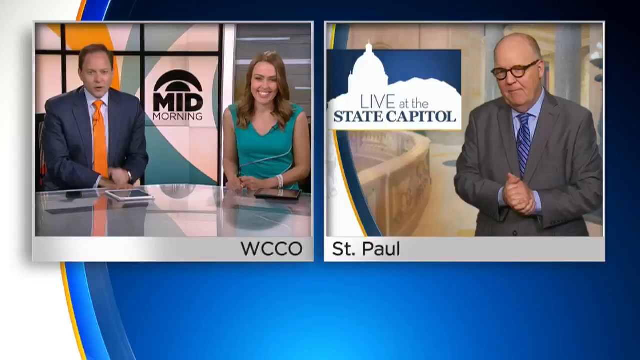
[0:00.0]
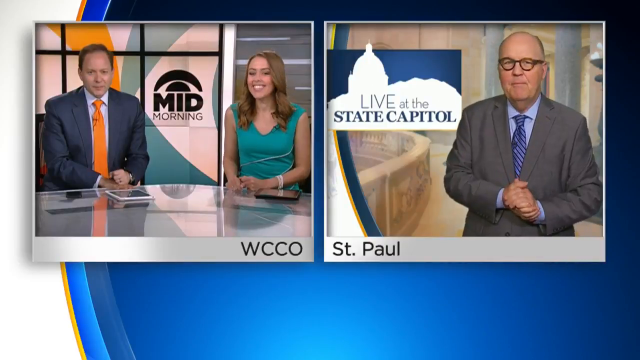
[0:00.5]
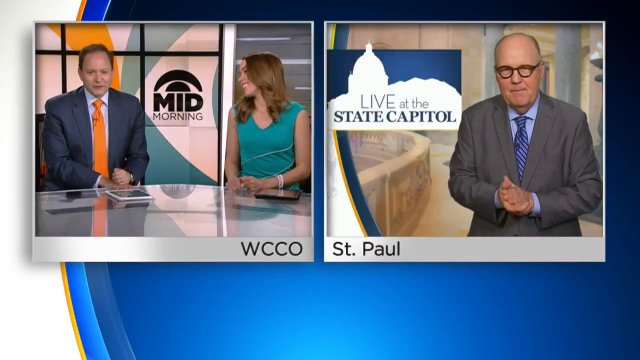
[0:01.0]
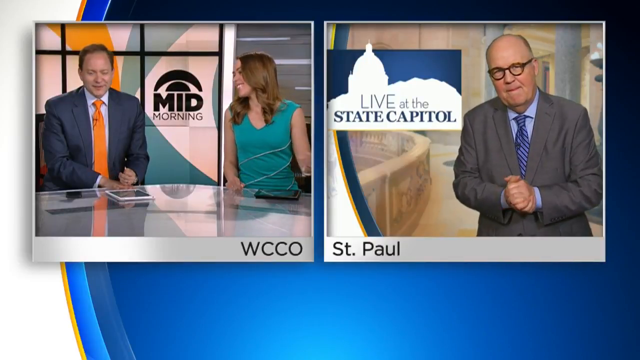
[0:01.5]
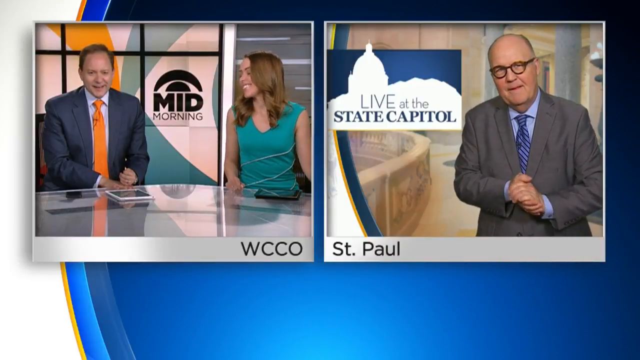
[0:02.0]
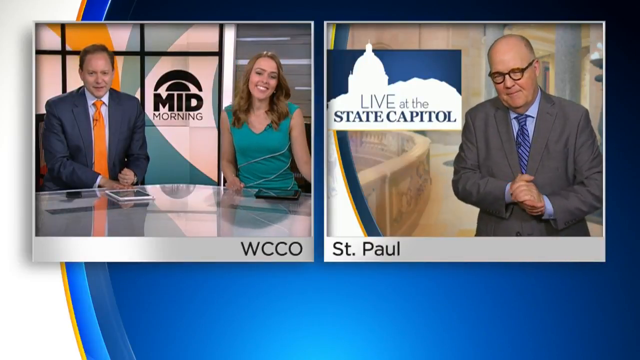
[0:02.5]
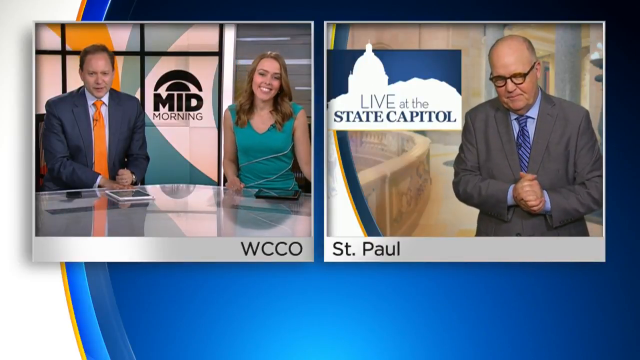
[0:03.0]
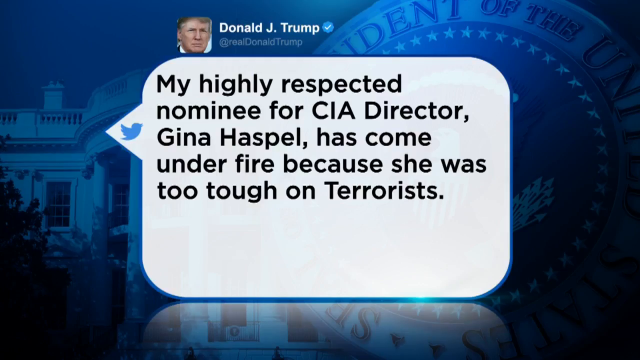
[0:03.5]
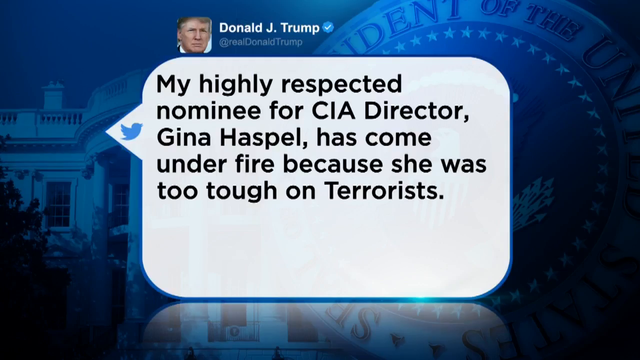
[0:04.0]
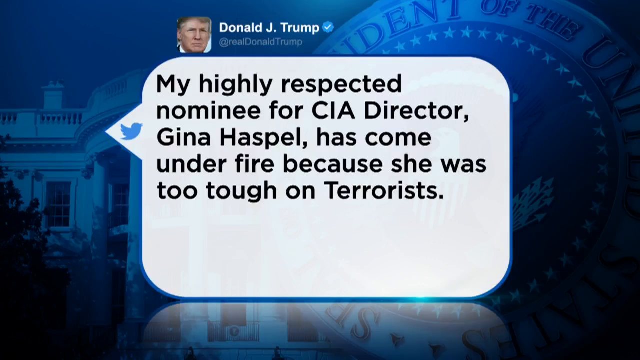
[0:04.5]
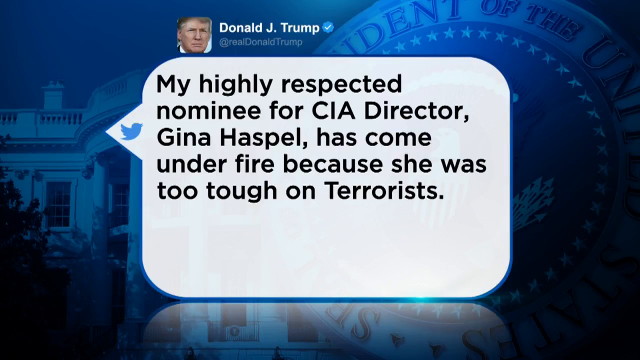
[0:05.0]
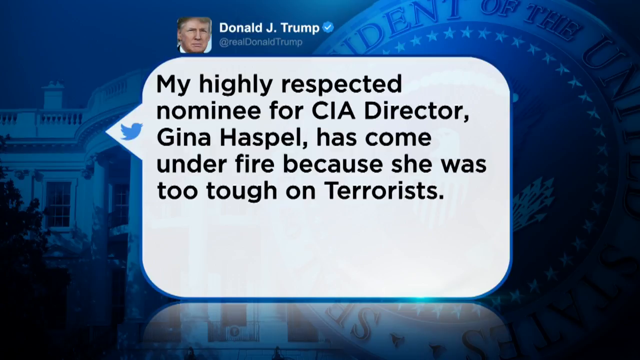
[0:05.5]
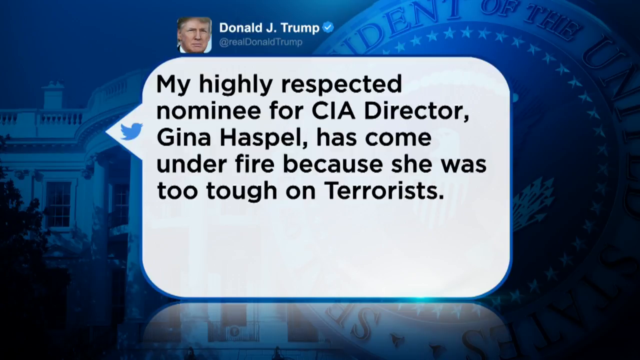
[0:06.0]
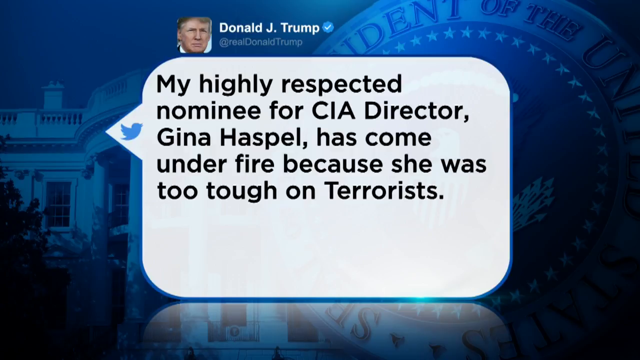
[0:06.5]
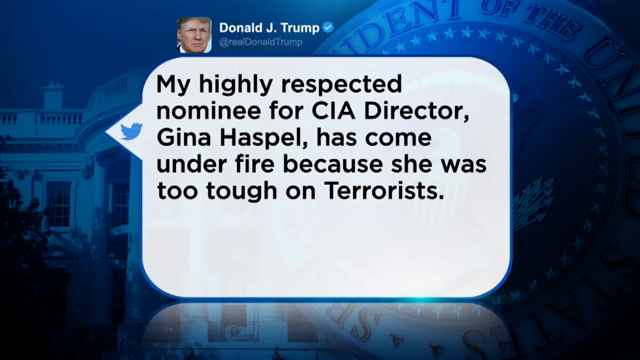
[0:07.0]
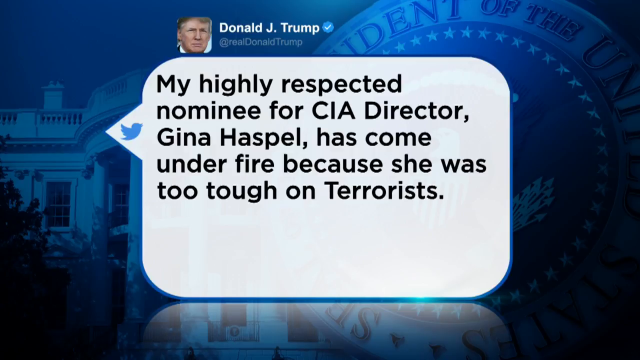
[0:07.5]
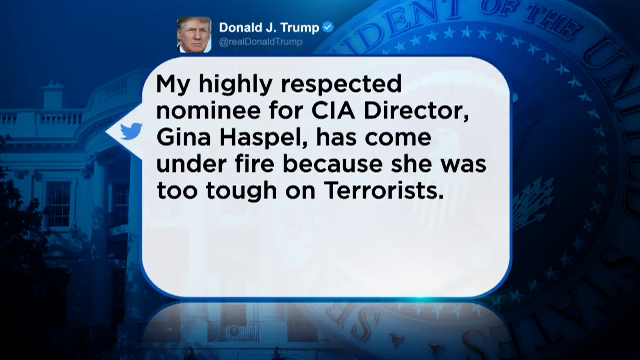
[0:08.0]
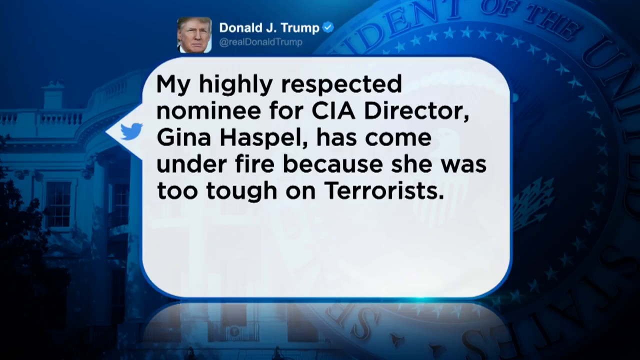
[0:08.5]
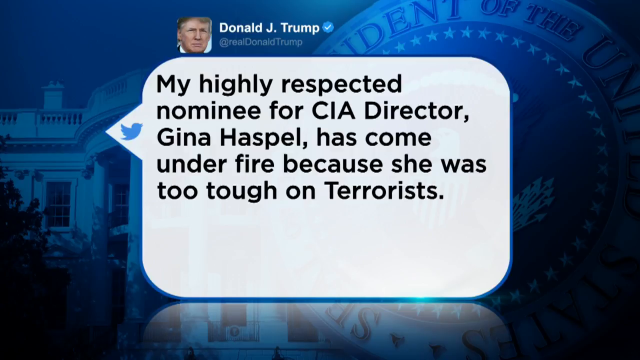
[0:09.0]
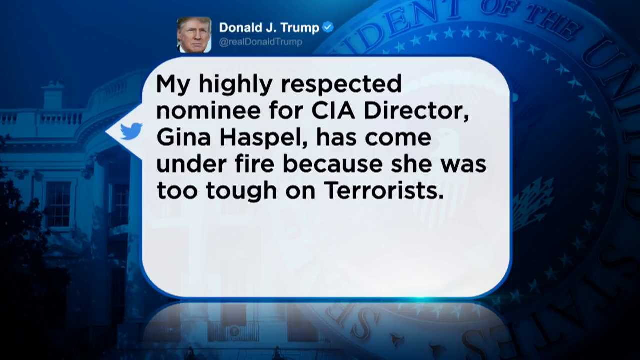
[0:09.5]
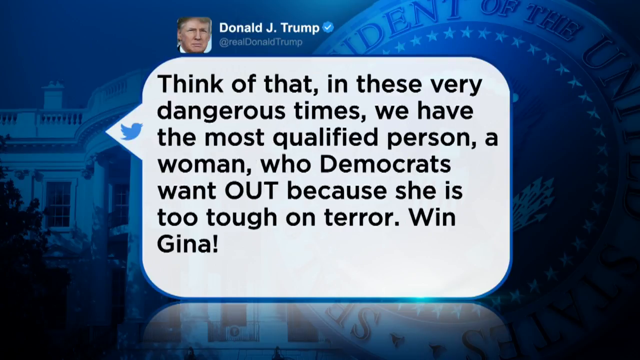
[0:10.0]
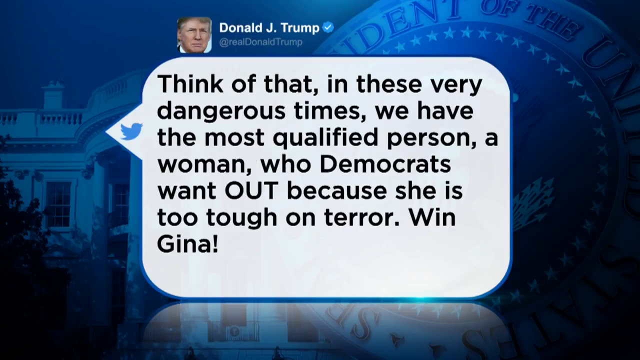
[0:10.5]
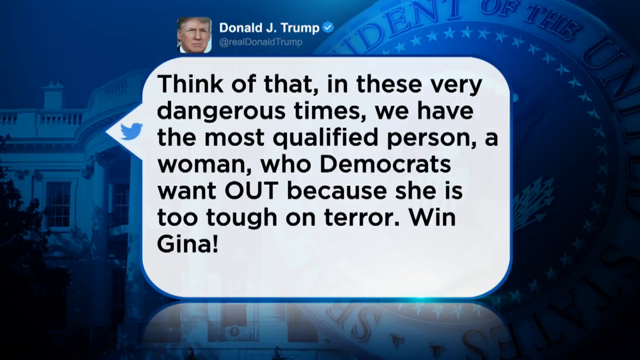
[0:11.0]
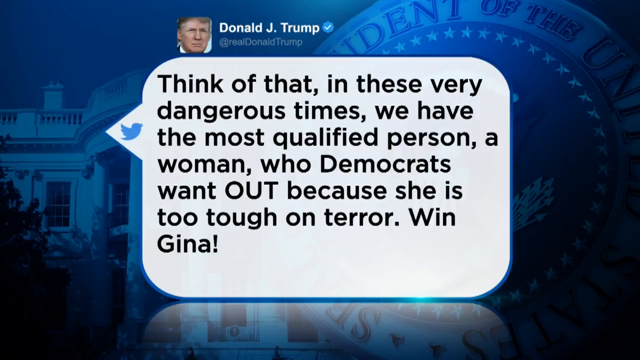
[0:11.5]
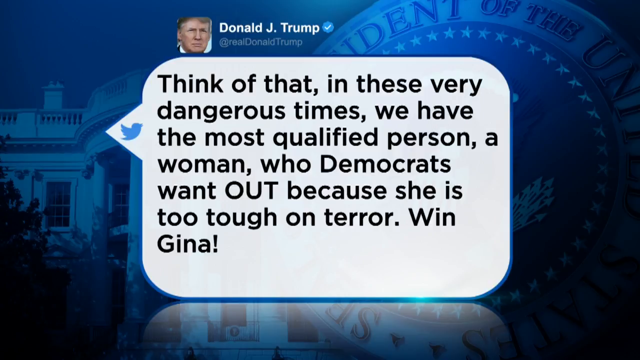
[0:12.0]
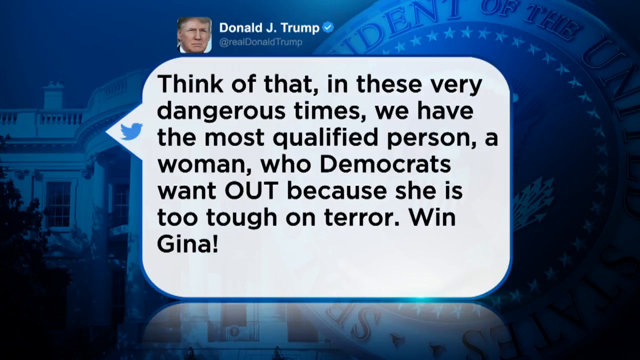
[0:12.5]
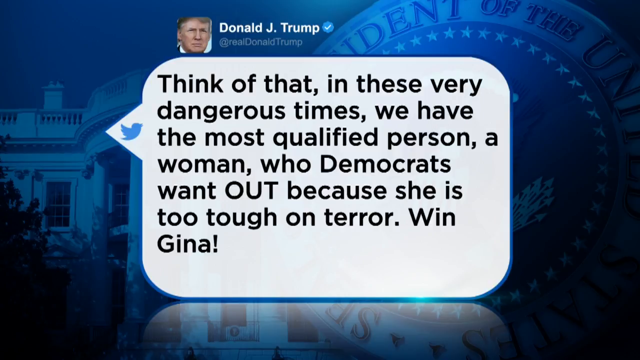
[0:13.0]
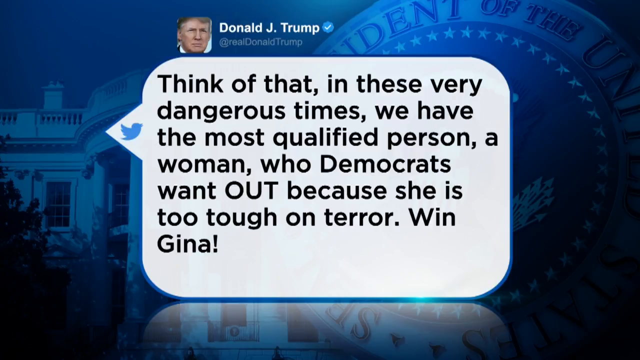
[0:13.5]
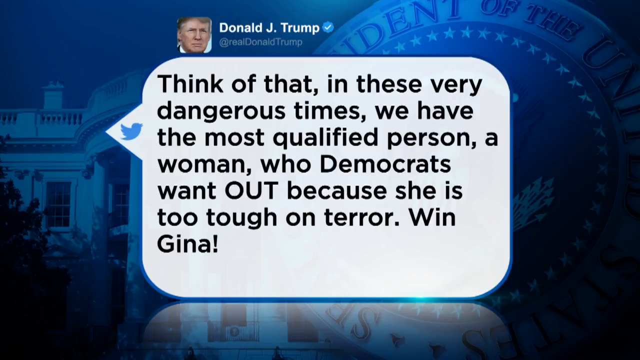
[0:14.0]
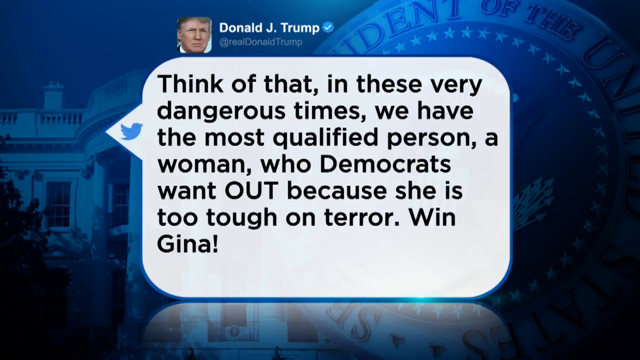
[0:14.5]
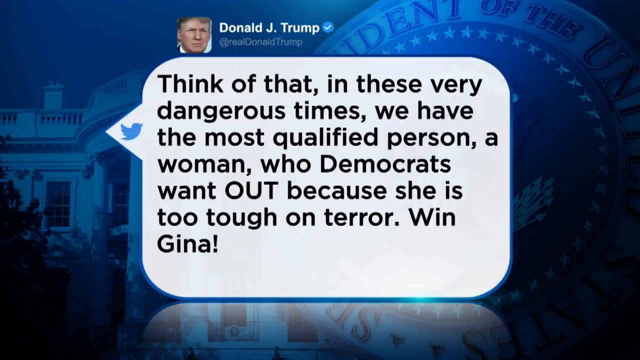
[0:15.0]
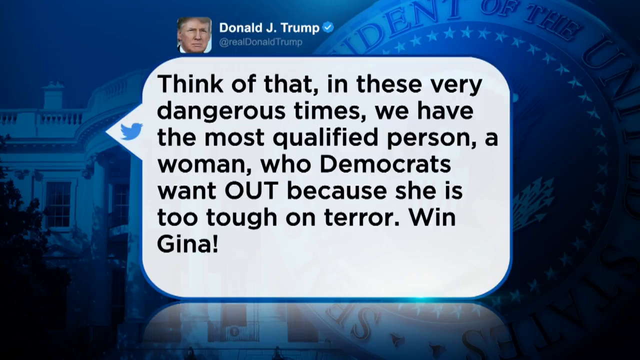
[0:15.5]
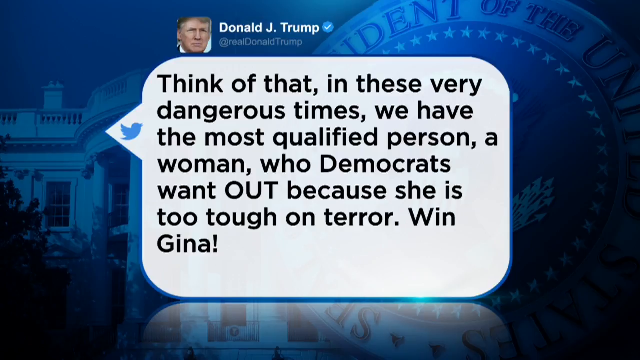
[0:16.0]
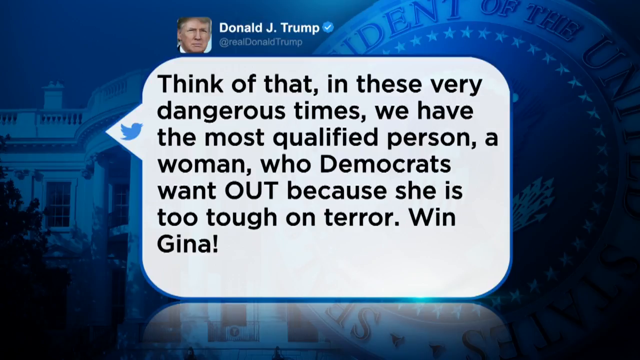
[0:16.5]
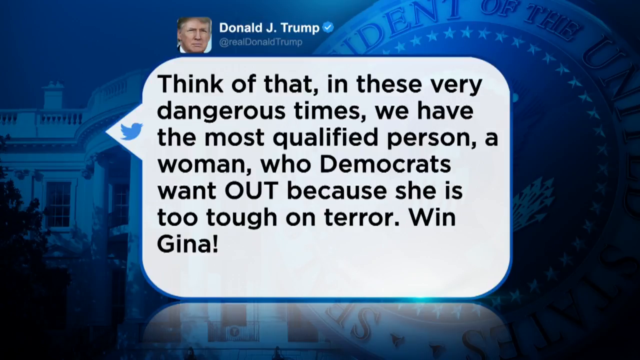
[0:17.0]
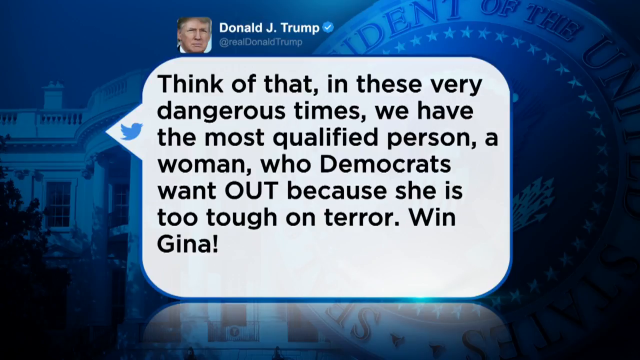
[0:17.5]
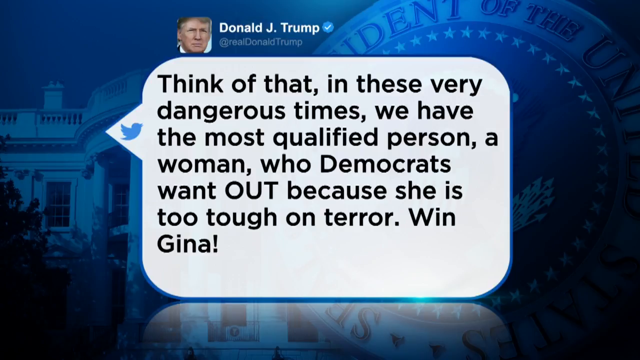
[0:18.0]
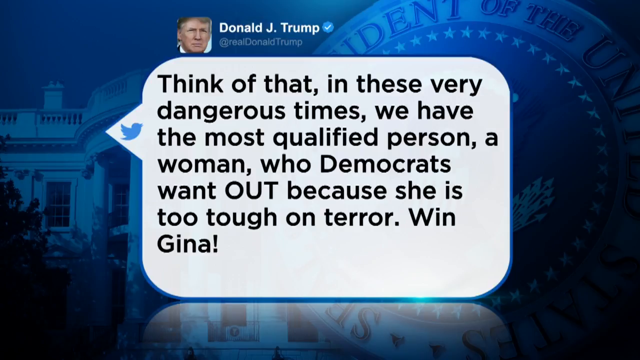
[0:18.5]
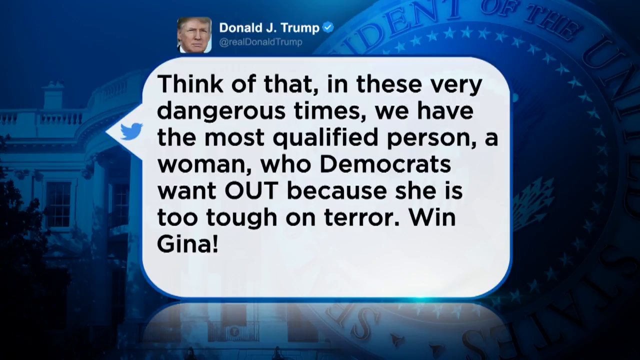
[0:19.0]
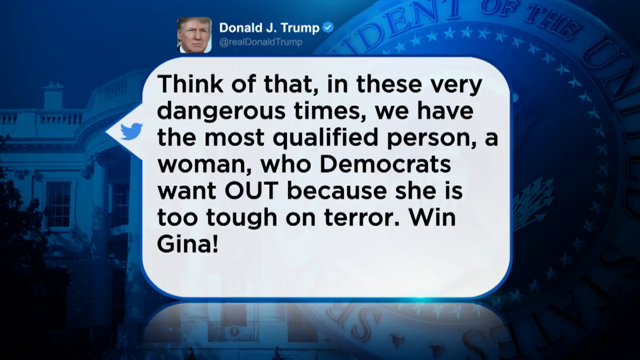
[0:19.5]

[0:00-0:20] The video begins with a split screen labeled WCCO, with Jason on the left; three people are on screen in all. The view then moves to a chat bubble showing a tweet from President Trump saying Gina Haspel has come under fire for being too tough on terrorists. It reads: "Think of that. In these very dangerous times, we have the most qualified person, a woman, who Democrats want out because she is too tough on terror. Win, Gina." The shot then returns to the studio, where Jason is seen with a woman.